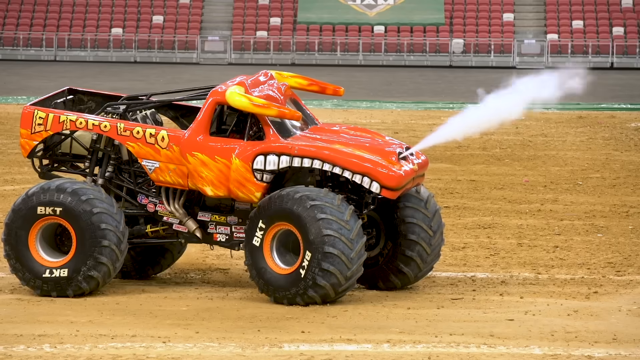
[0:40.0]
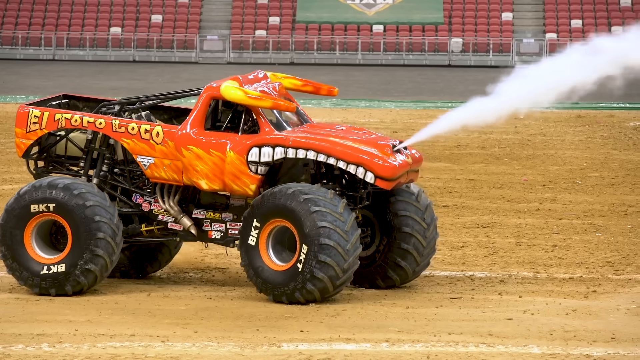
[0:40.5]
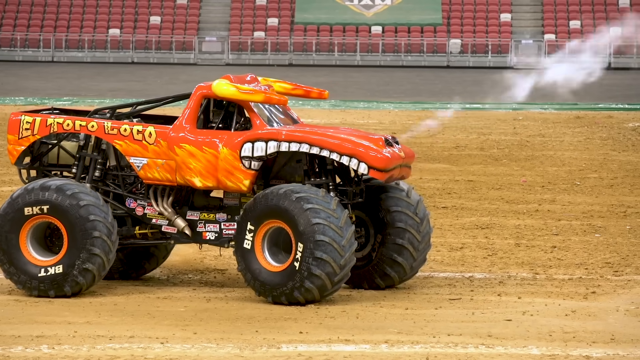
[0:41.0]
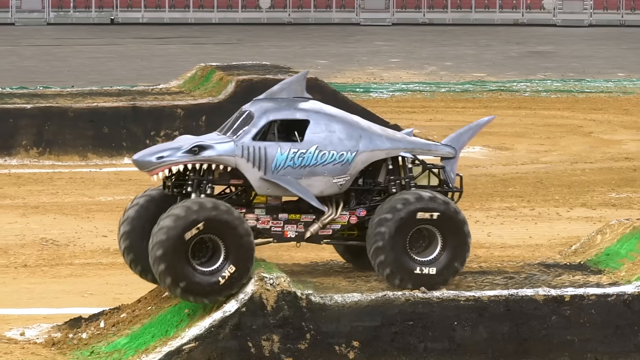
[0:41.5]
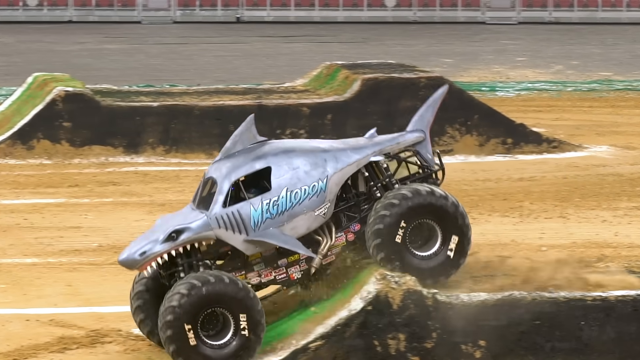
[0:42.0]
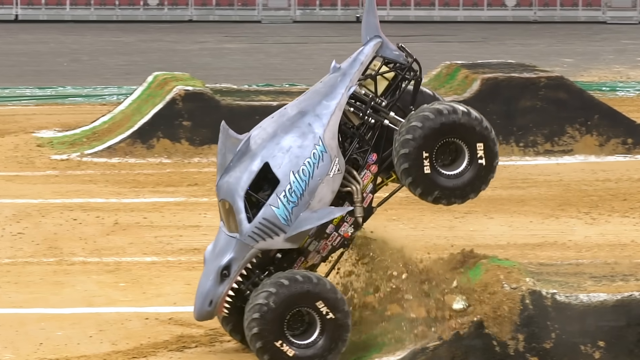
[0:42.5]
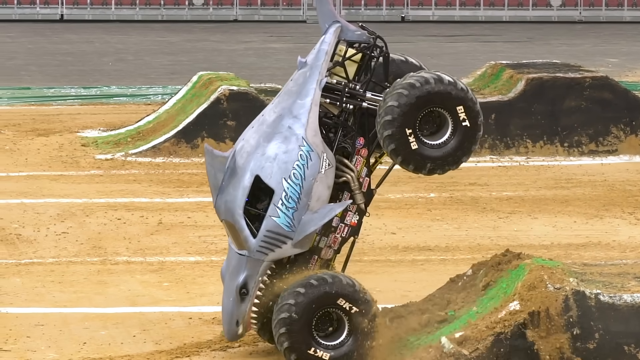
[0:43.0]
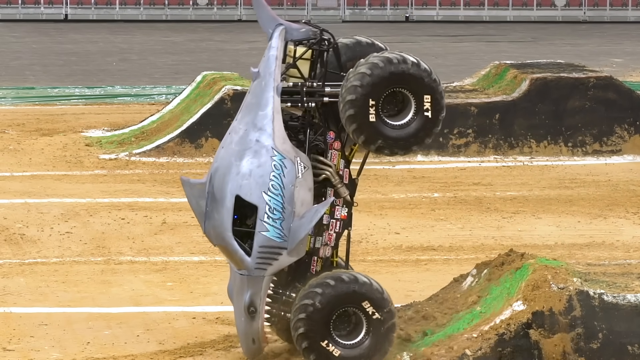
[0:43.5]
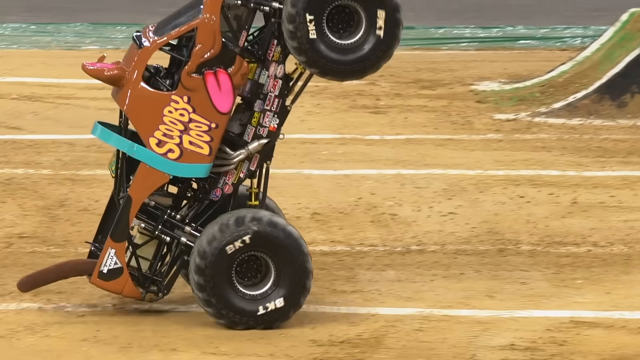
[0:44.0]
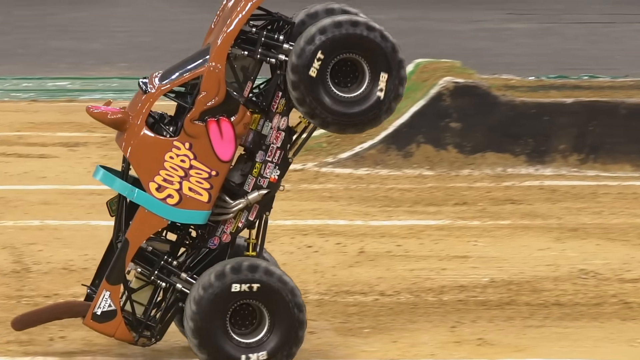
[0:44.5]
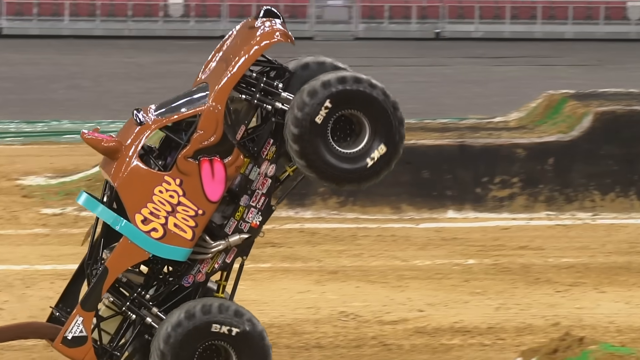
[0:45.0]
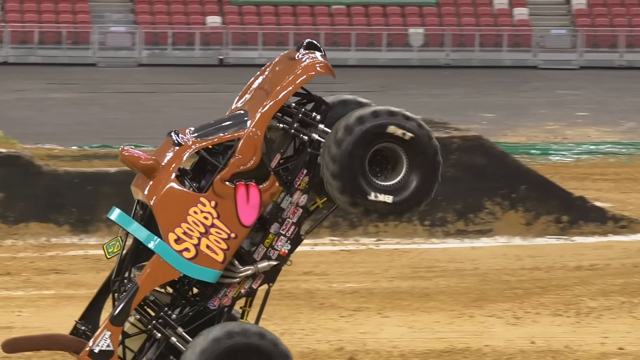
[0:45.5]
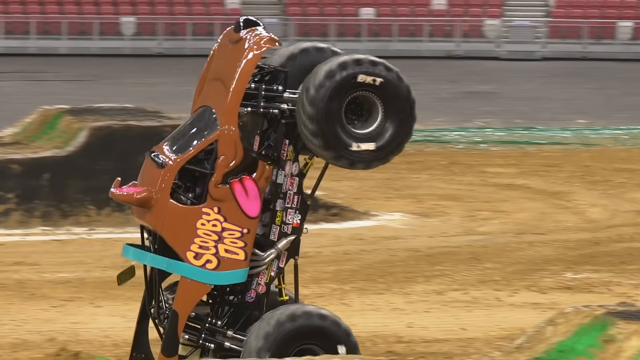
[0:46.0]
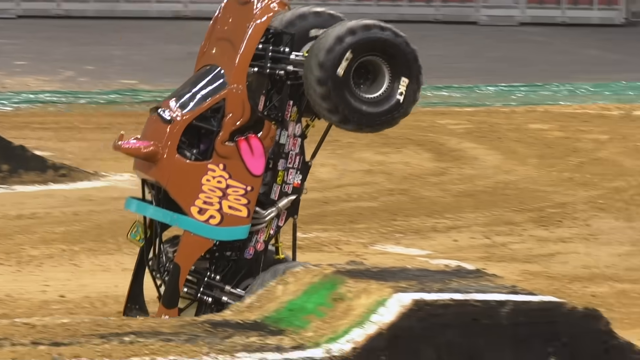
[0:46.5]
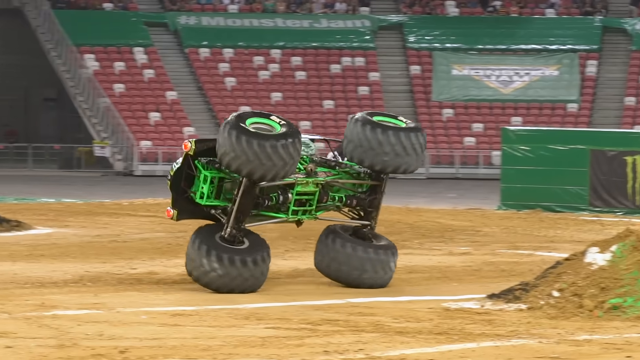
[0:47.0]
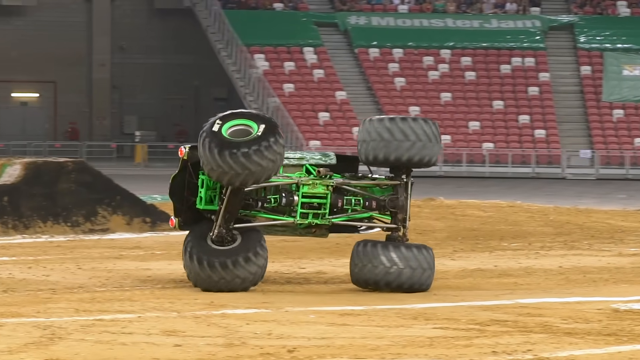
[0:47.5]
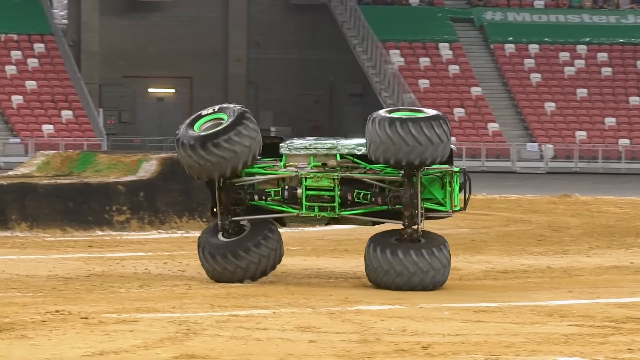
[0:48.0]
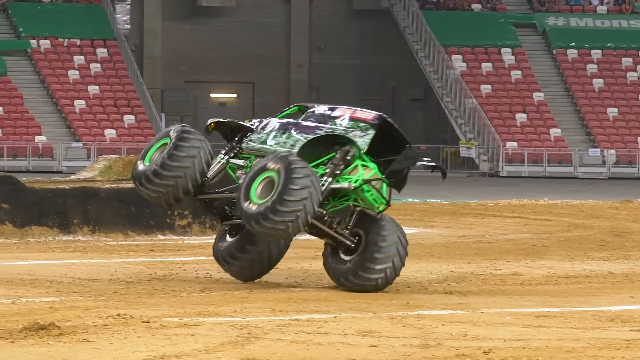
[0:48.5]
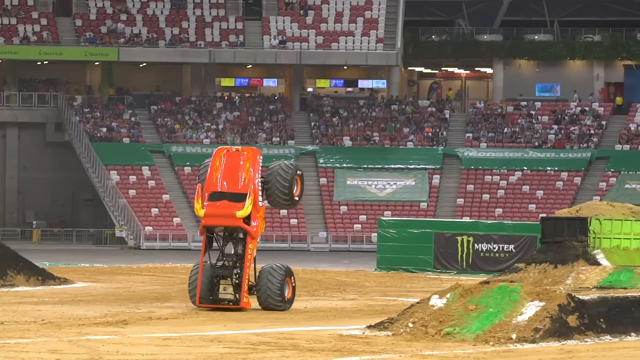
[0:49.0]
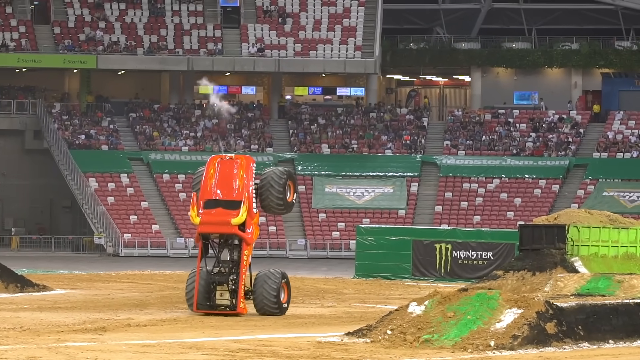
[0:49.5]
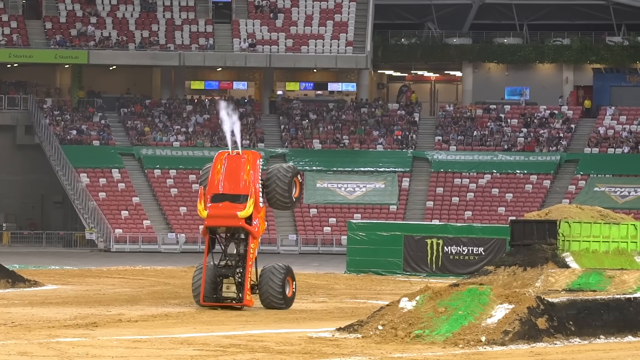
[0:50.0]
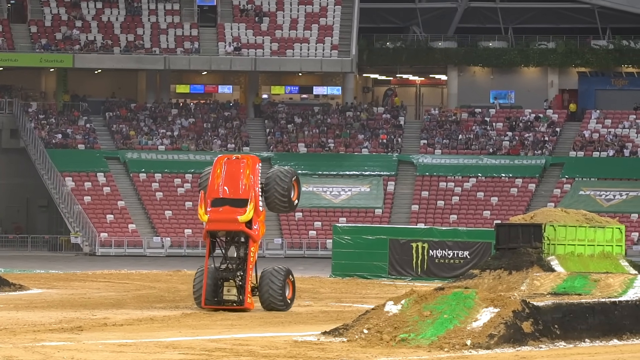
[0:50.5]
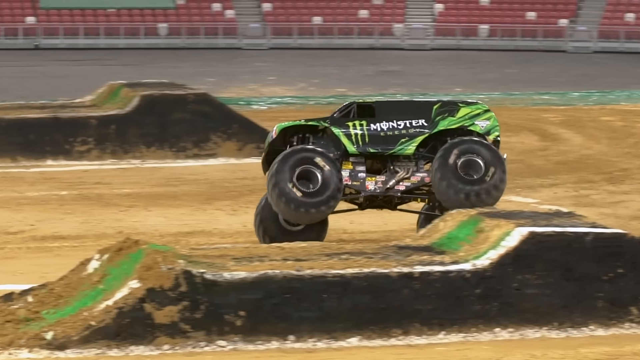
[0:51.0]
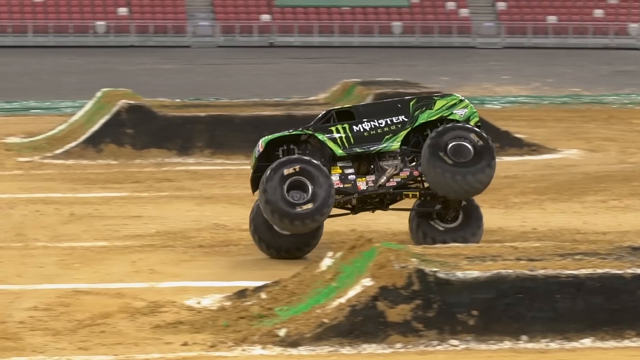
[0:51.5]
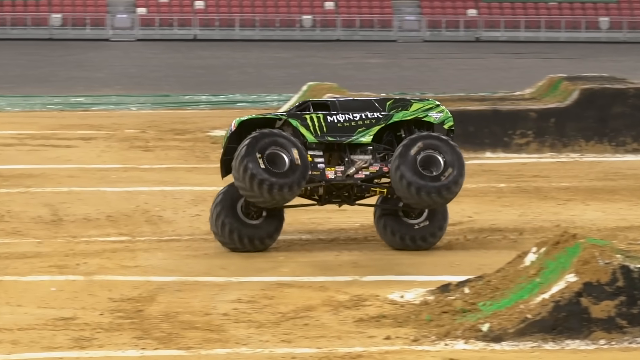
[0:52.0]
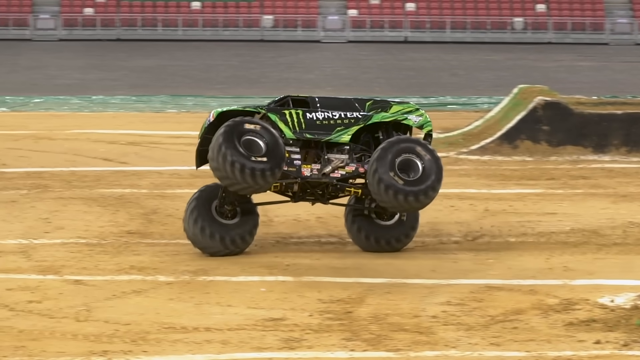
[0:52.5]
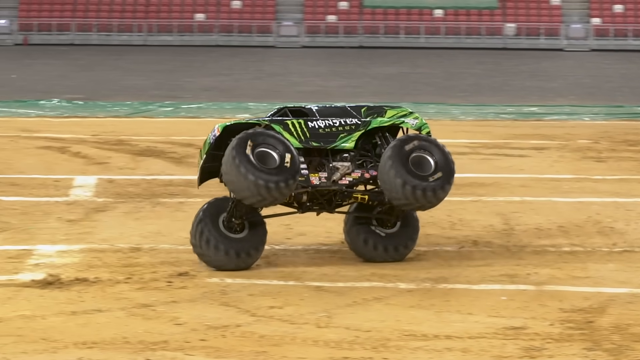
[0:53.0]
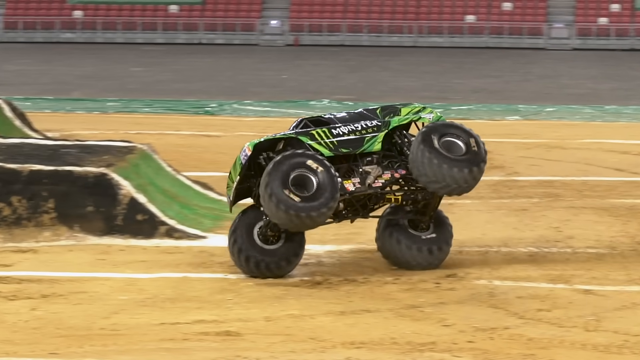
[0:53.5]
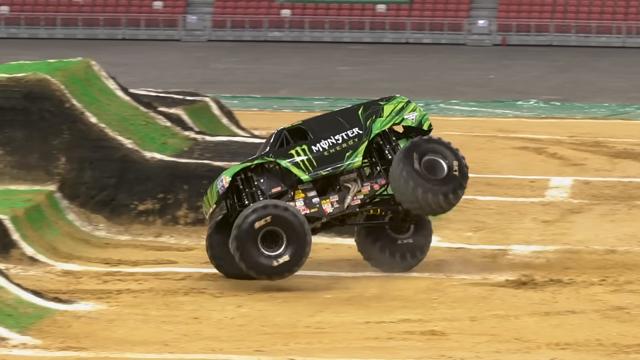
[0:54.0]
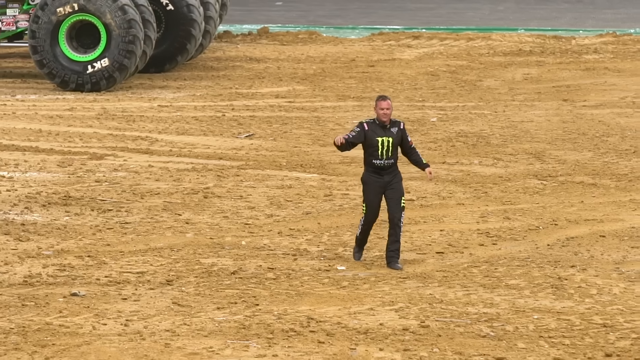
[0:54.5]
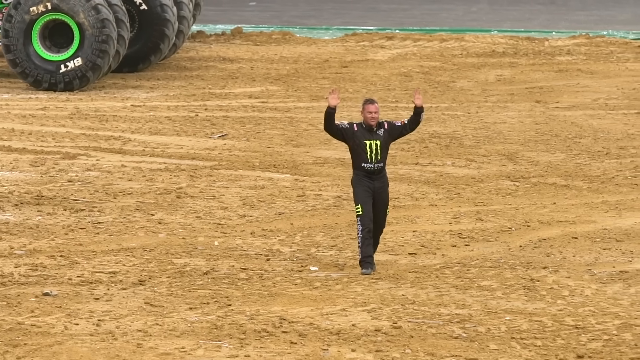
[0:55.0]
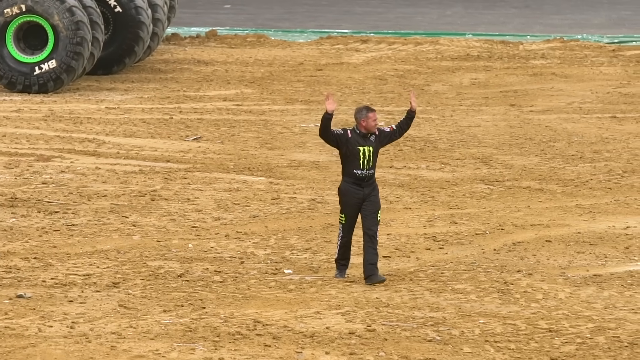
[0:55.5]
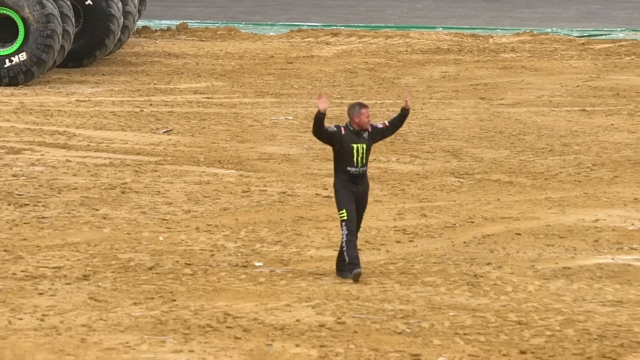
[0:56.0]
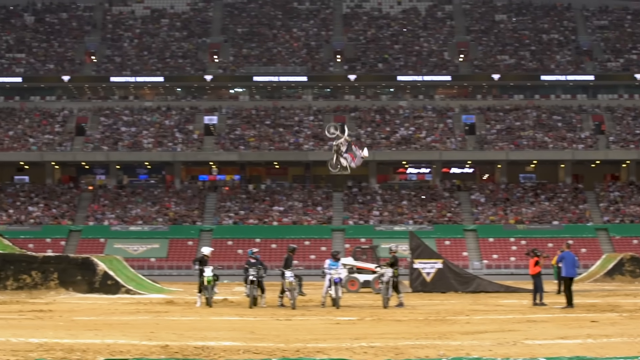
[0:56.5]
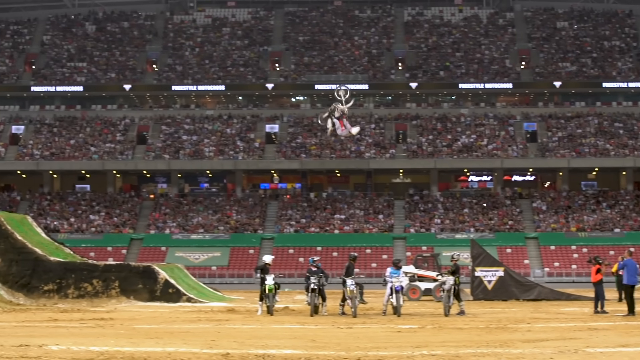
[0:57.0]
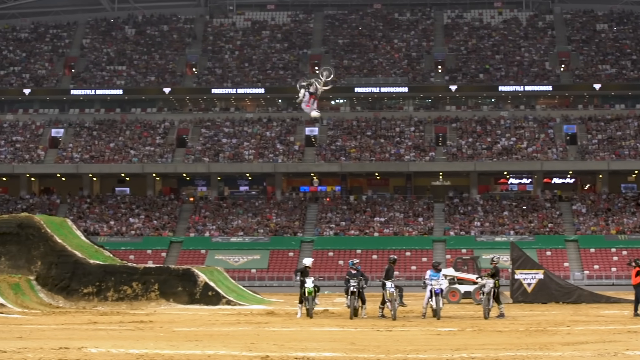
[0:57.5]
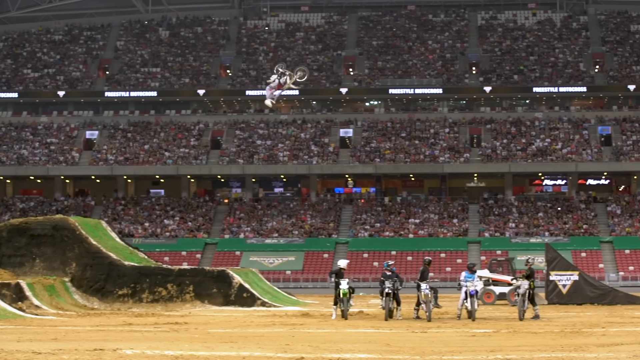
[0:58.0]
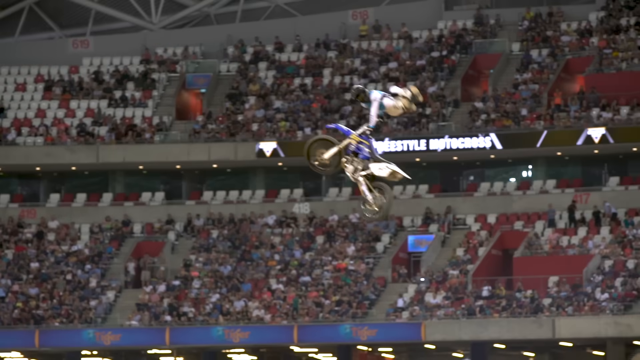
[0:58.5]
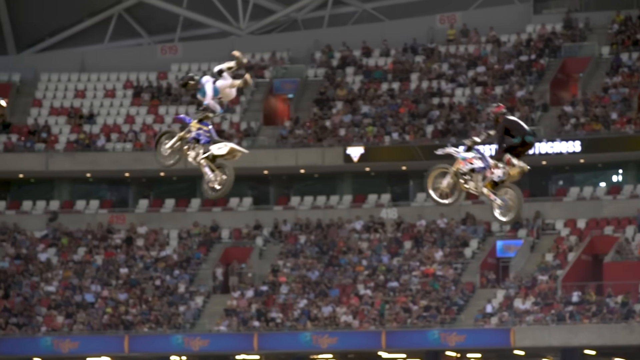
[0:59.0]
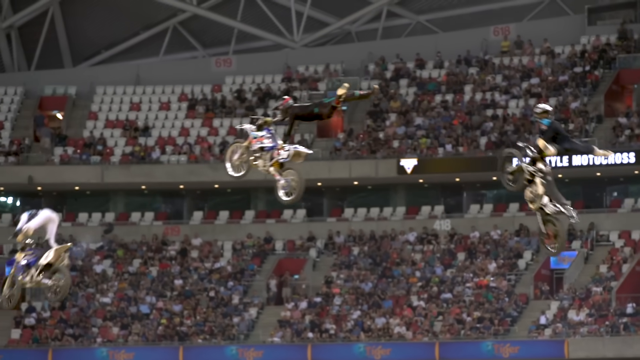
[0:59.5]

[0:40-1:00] The vehicles have different shapes, colours and abilities: one throws water, another is driven sideways. It looks like a game in which every car performs its own actions. The video is not very clear, making it hard to follow how the game goes, but the cars can be seen reacting differently. There is a grey one that looks like a shark and a green and chocolate one. The scene then changes to bicycles flying up into the air, which seems magical.